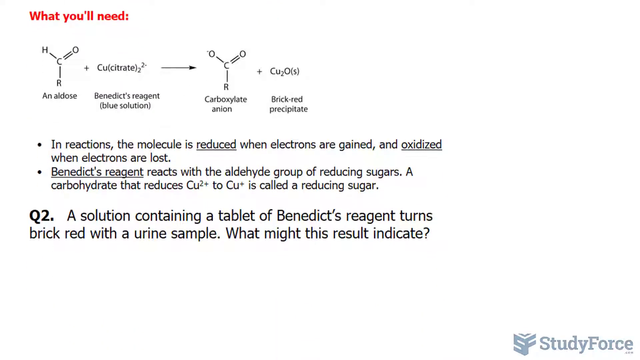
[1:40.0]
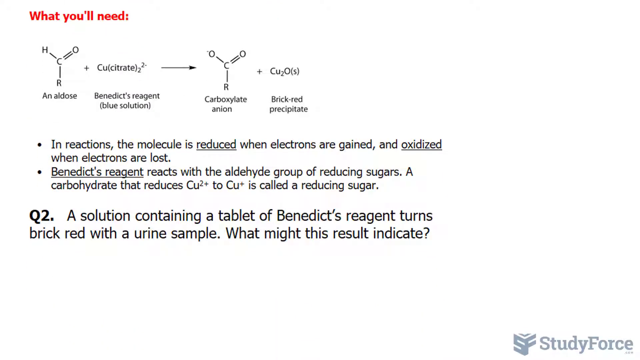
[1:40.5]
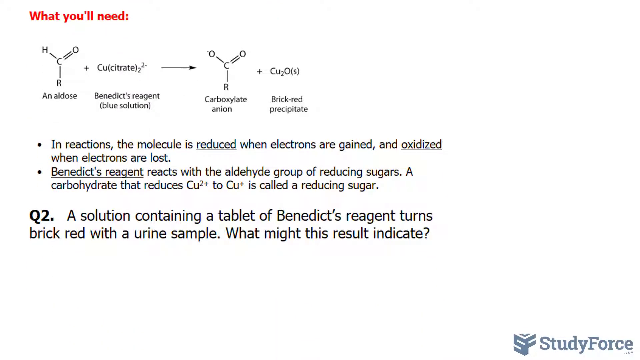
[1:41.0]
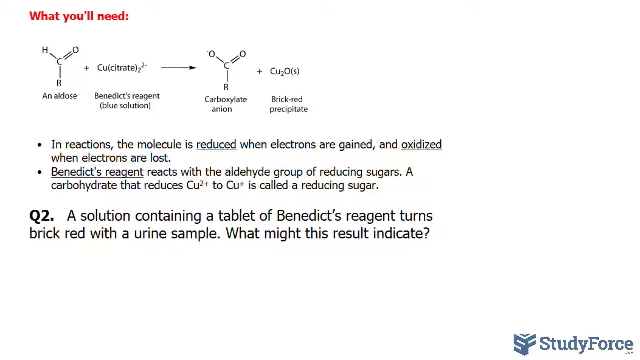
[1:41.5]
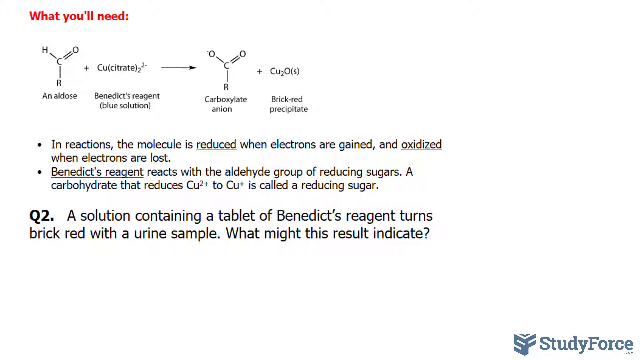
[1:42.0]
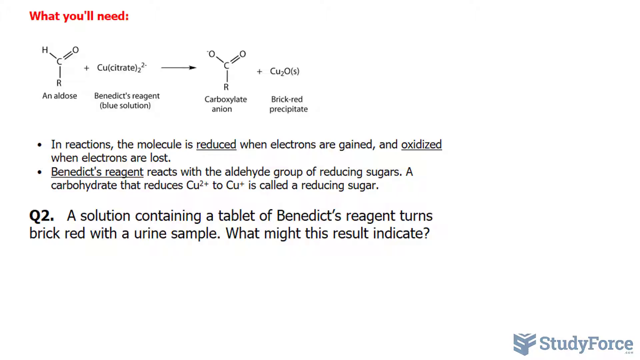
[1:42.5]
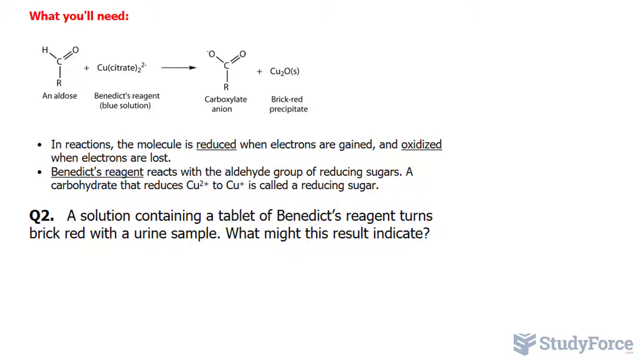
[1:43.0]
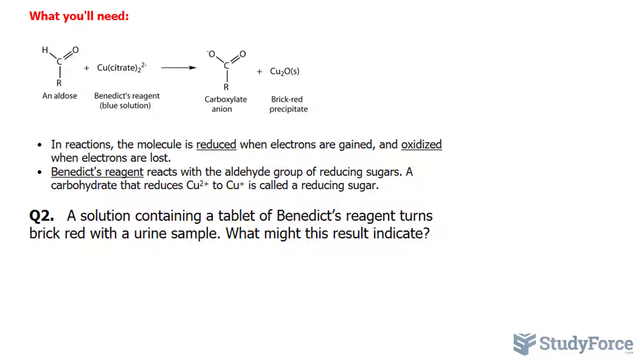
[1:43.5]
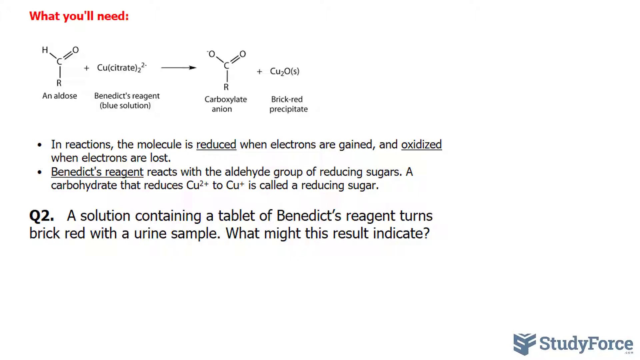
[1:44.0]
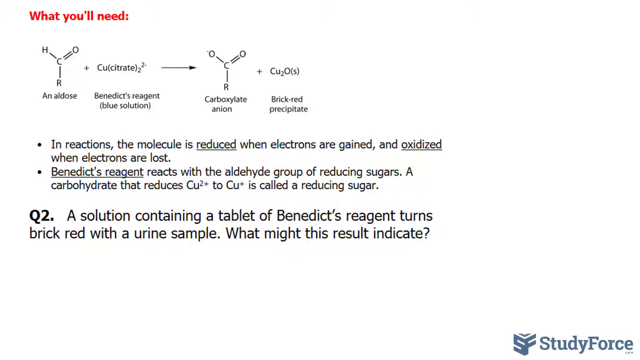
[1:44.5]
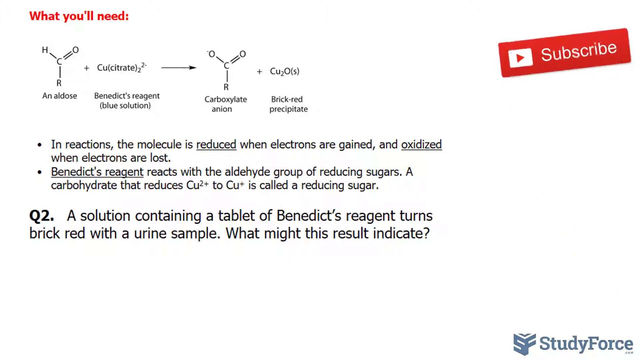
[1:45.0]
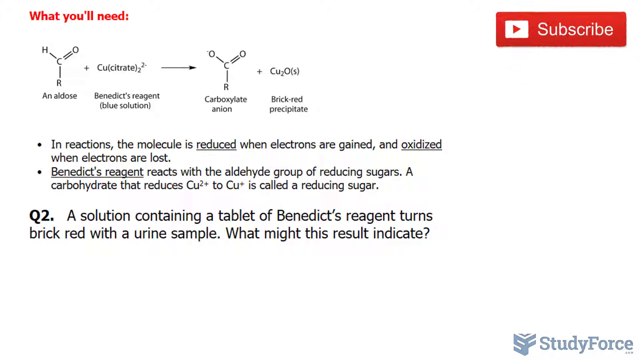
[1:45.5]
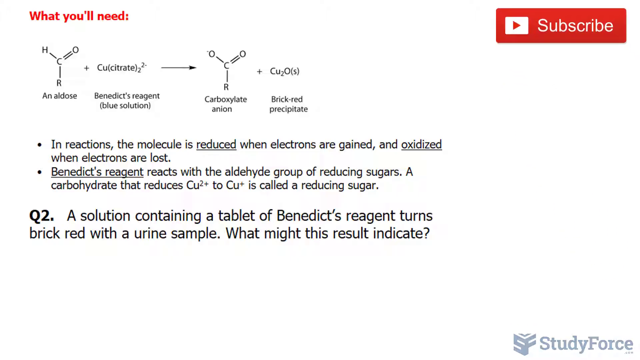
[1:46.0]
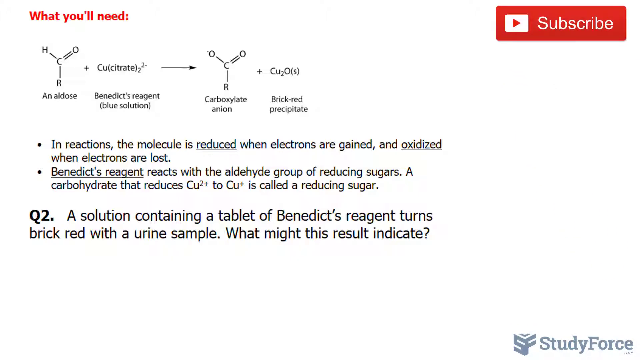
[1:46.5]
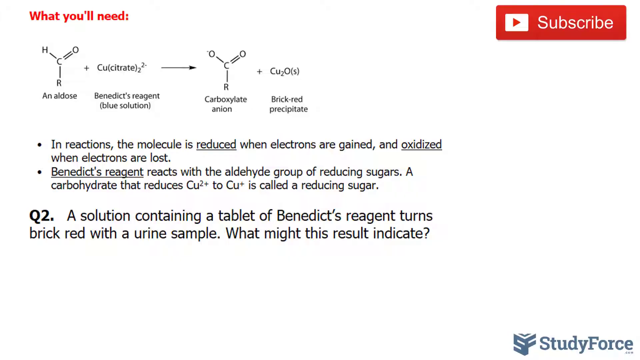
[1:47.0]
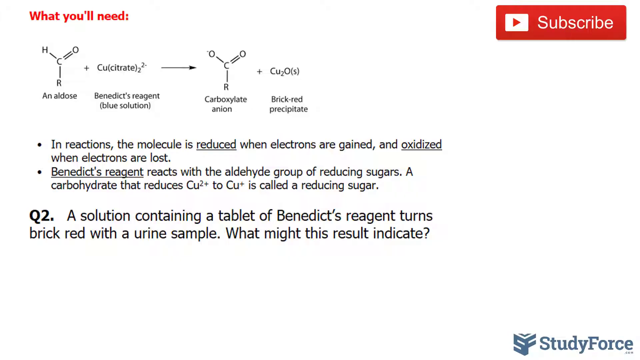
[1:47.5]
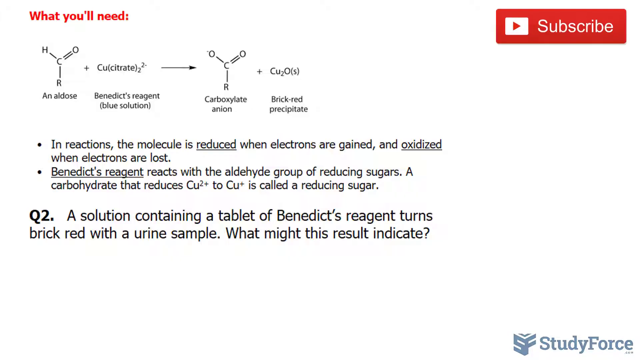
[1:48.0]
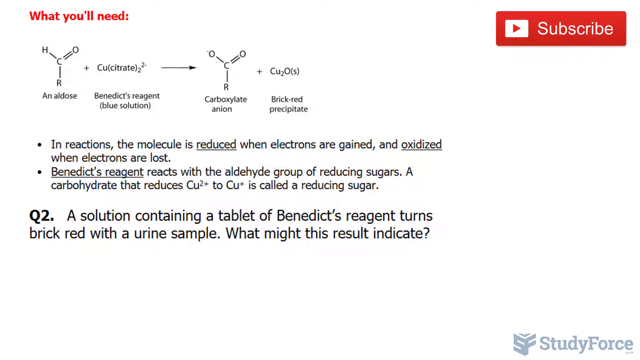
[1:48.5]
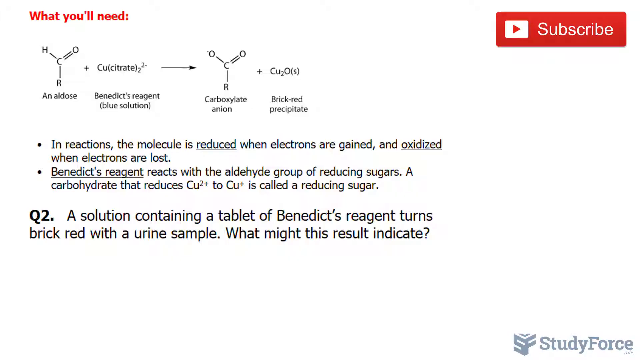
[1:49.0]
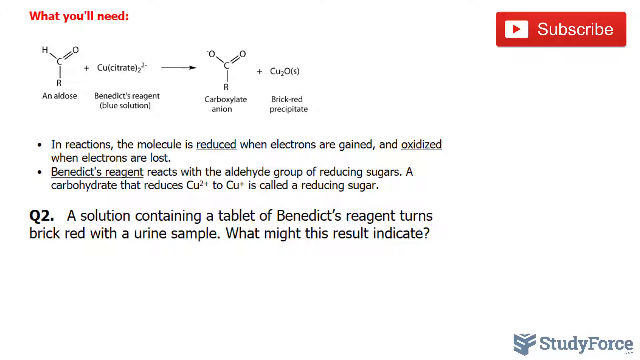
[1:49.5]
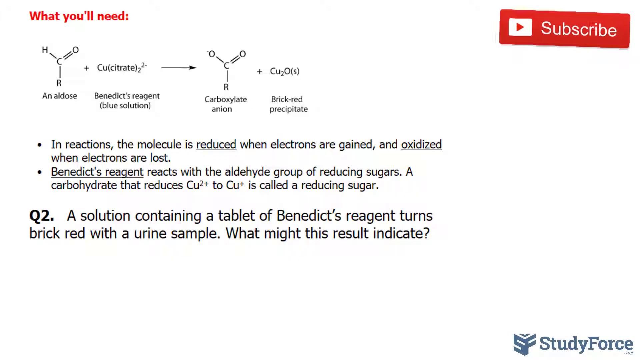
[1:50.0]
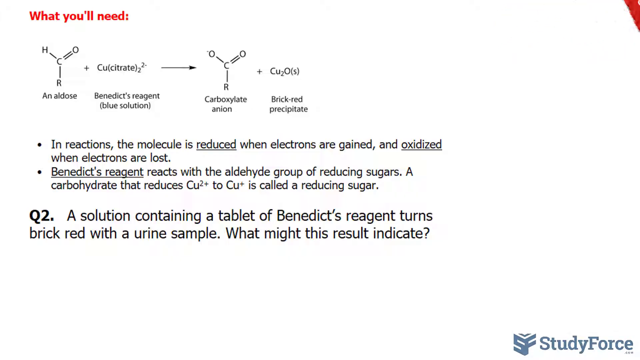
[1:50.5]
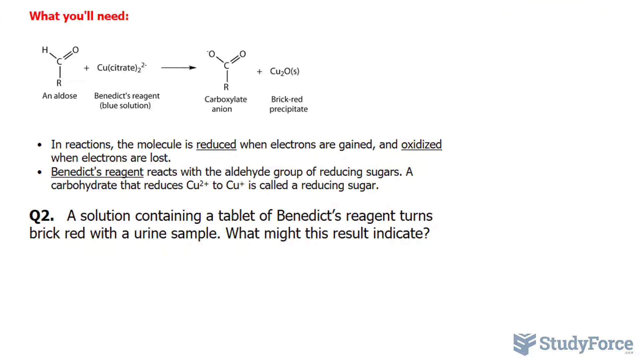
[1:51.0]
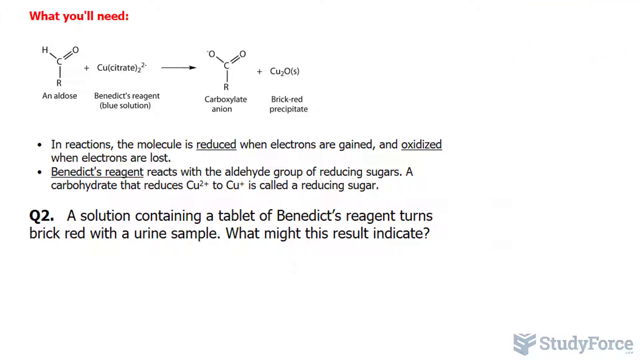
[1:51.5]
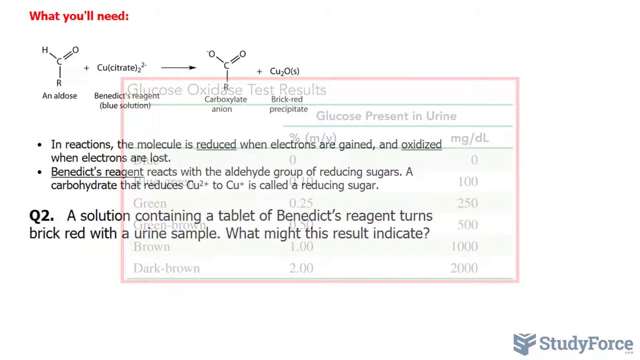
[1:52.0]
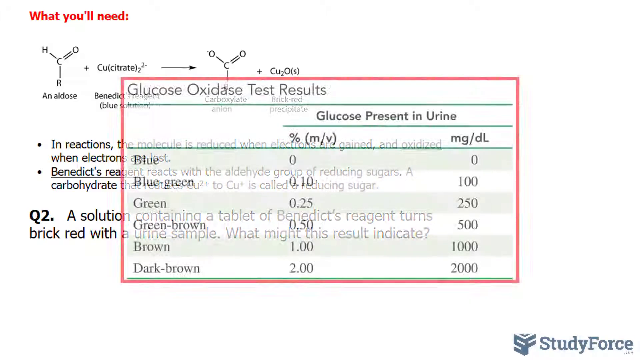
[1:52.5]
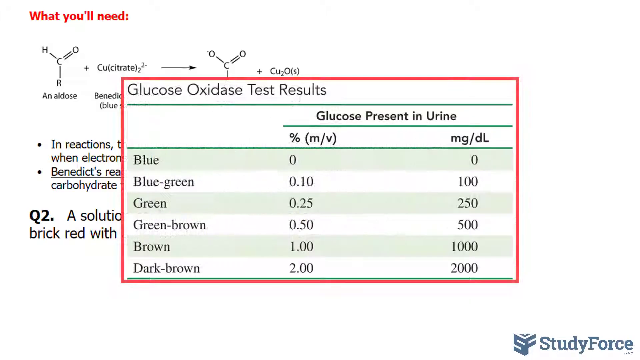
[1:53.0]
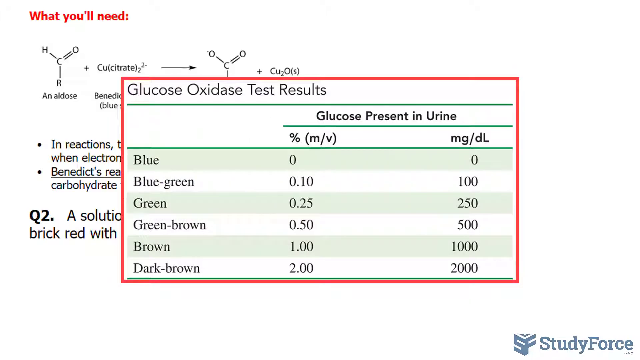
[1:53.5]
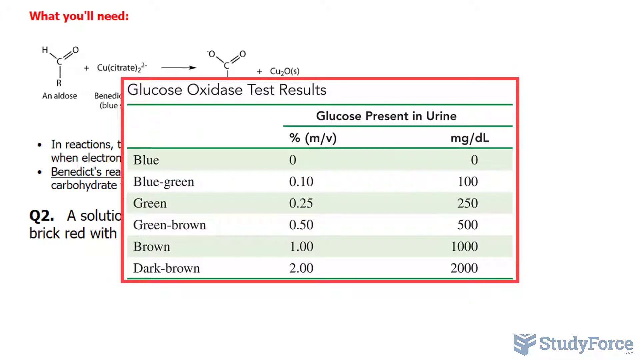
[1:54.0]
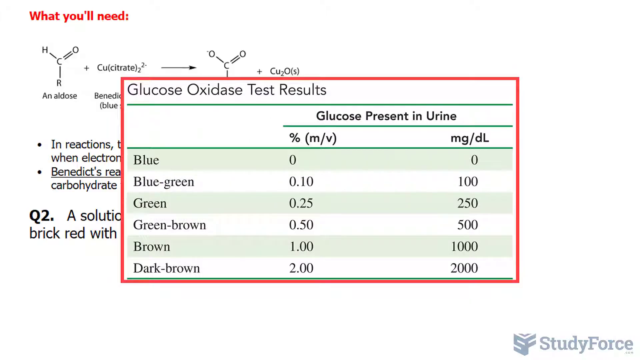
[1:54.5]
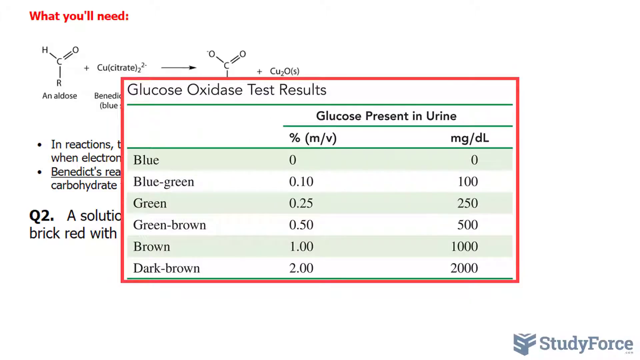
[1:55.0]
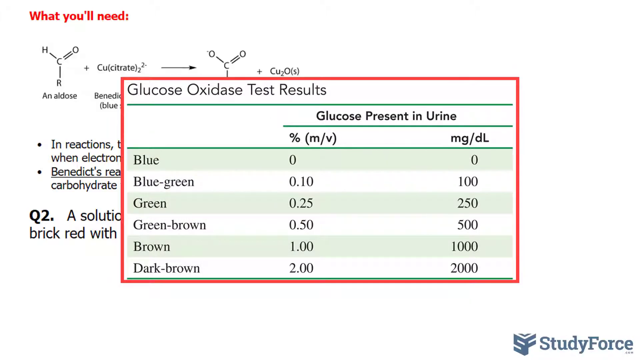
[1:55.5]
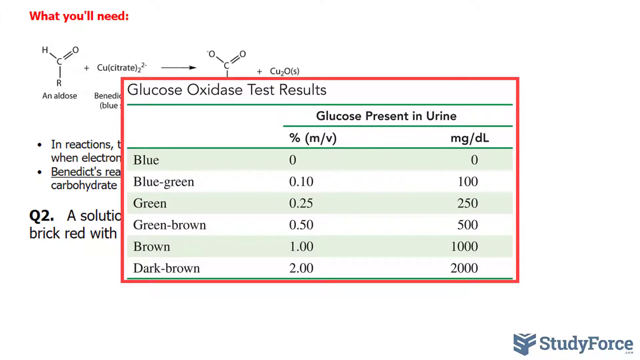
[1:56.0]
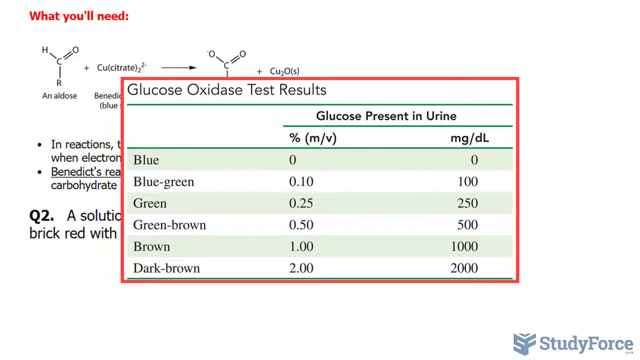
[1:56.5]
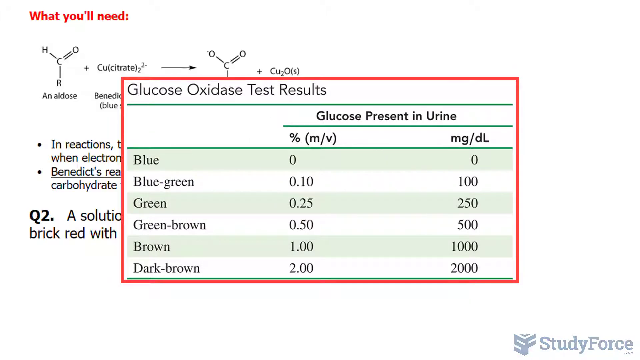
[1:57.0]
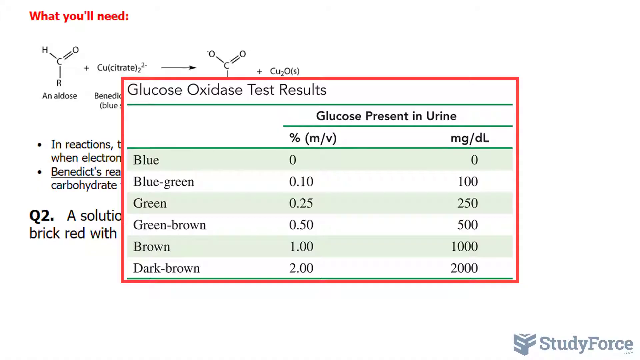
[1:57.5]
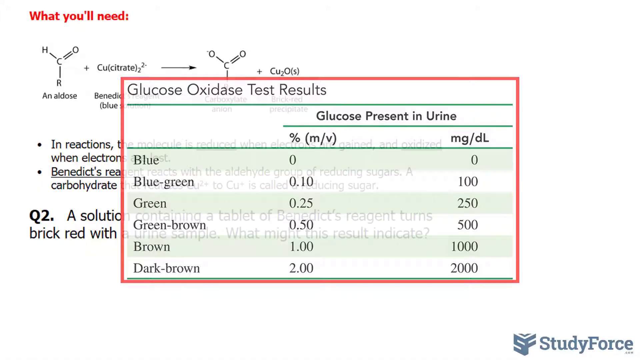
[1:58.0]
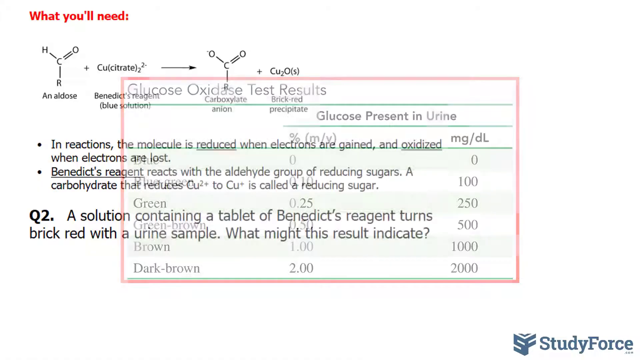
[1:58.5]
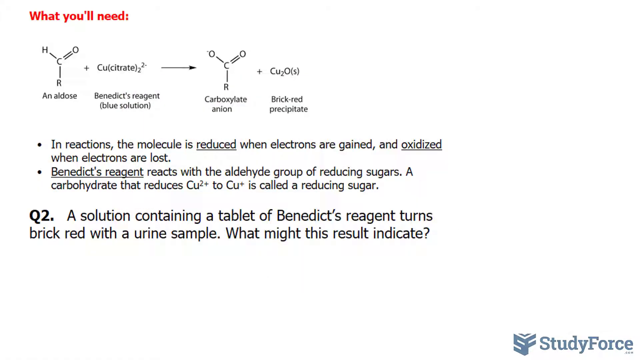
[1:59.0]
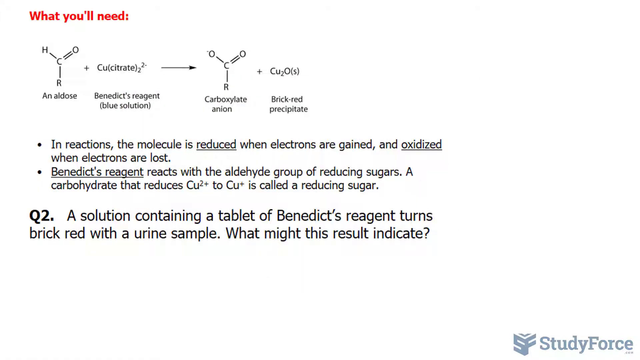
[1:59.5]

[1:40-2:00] The page zooms inward so everything can be seen, with studyforce.com and a red subscribe button visible. A table then pops up on the screen, headlined "glucose oxidase test results", with a second line reading "glucose present in urine"; it seems to be a result. Down the side are the labels blue, blue-green, green, green-brown, brown and dark-brown. The second column shows a percentage with the unit m/v, and another column shows mg/dl. The values are: blue 0 and 0; blue-green 0.1 and 100; green 0.25 and 250; green-brown 0.5 and 500; brown 1 and 1000; dark-brown 2 and 2000. The table is highlighted in red and is prominent on the screen. It then disappears, returning to question 2 with the red "what you'll need" above it.